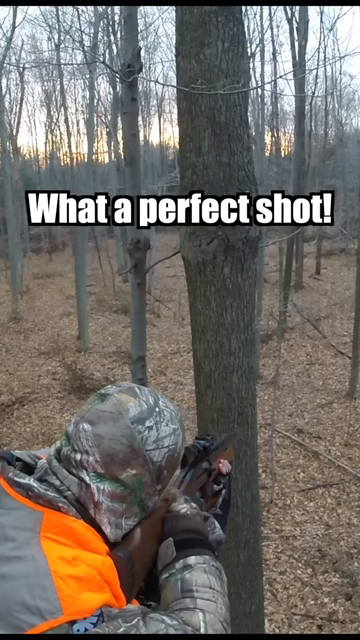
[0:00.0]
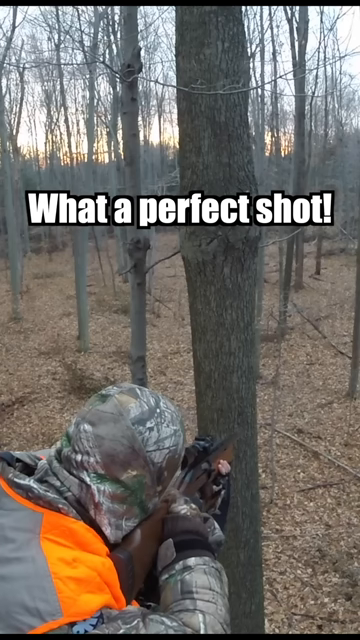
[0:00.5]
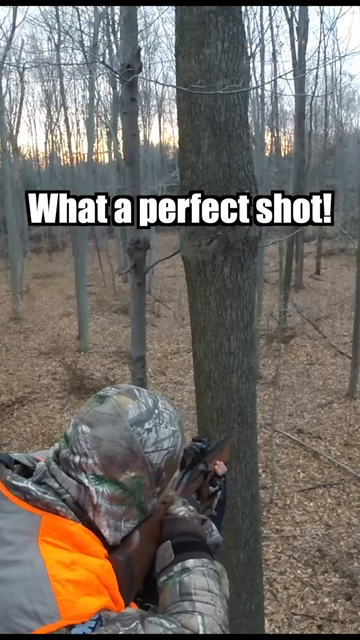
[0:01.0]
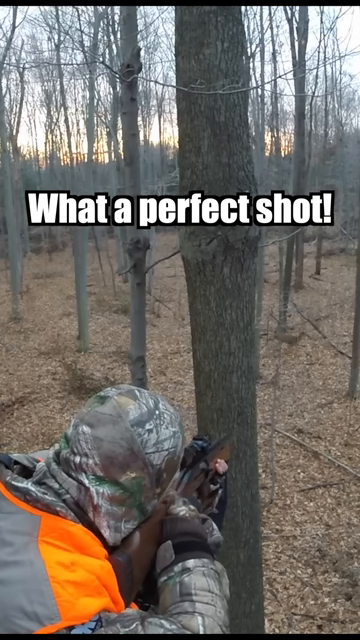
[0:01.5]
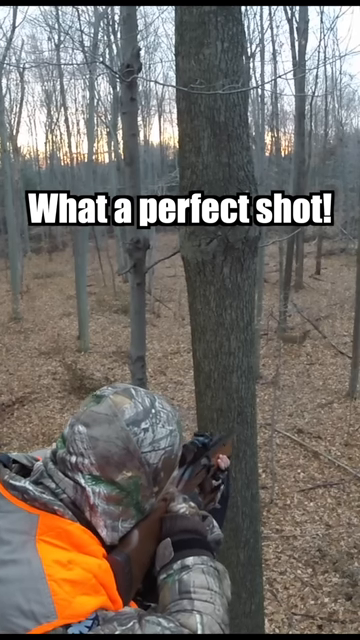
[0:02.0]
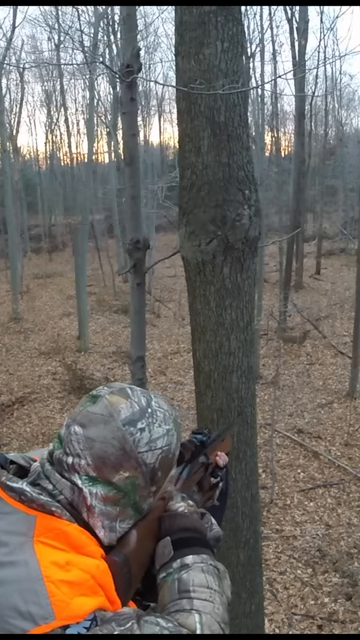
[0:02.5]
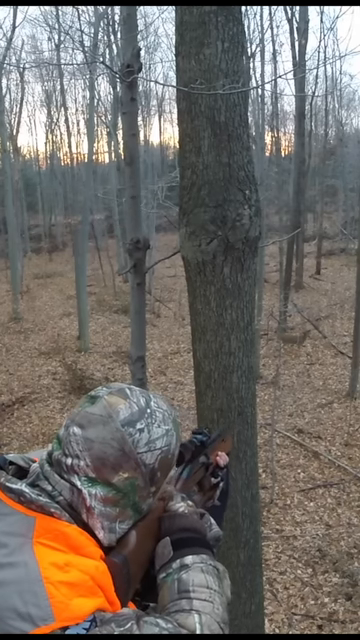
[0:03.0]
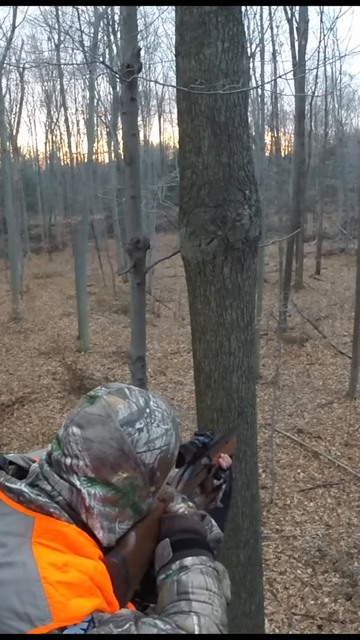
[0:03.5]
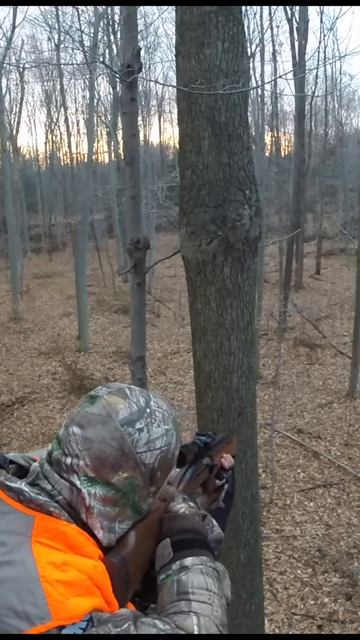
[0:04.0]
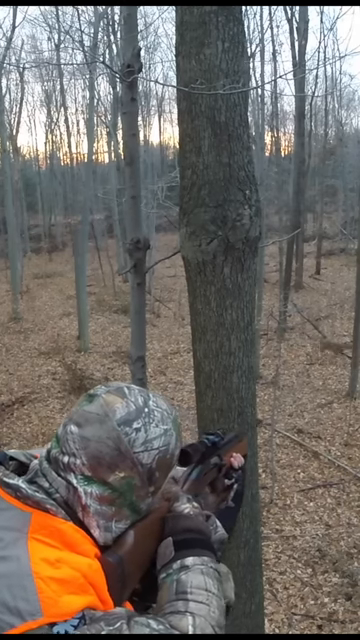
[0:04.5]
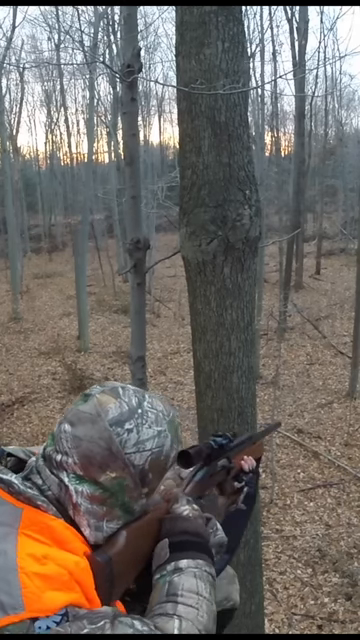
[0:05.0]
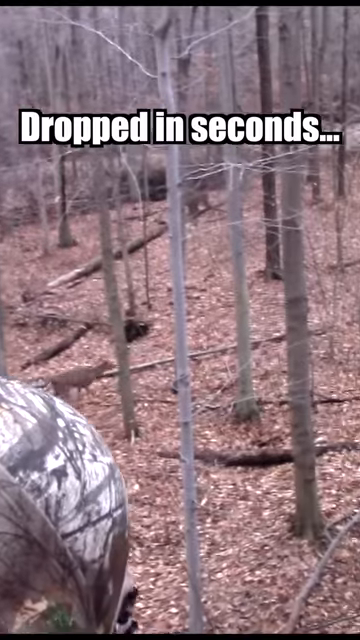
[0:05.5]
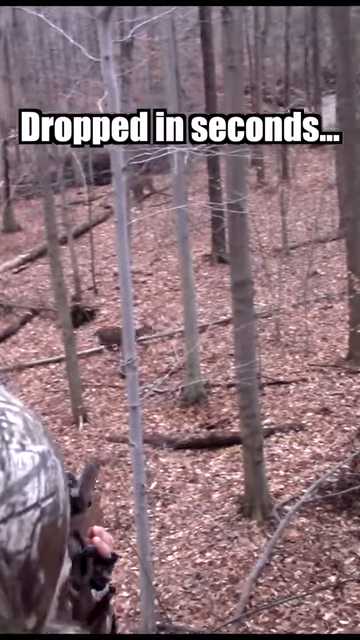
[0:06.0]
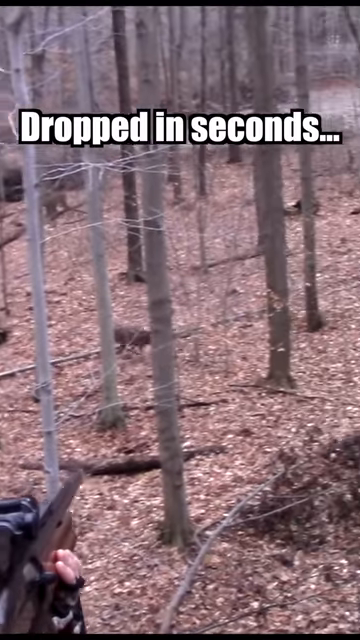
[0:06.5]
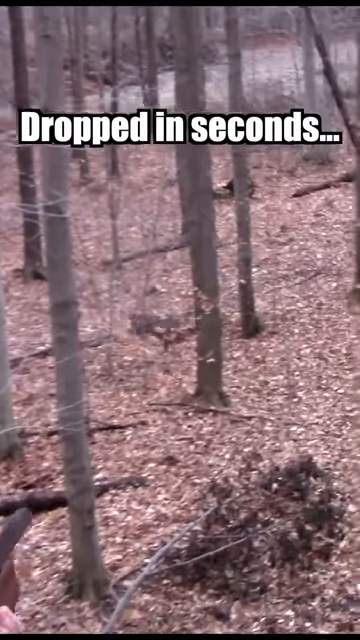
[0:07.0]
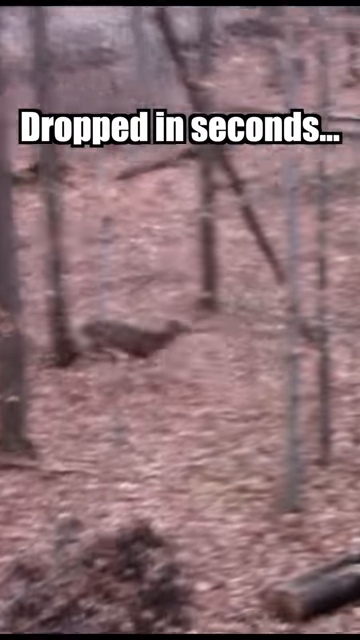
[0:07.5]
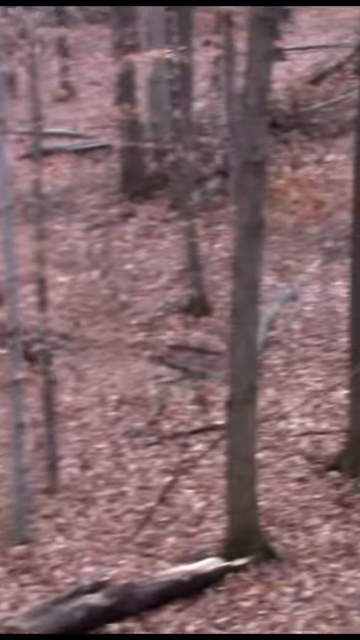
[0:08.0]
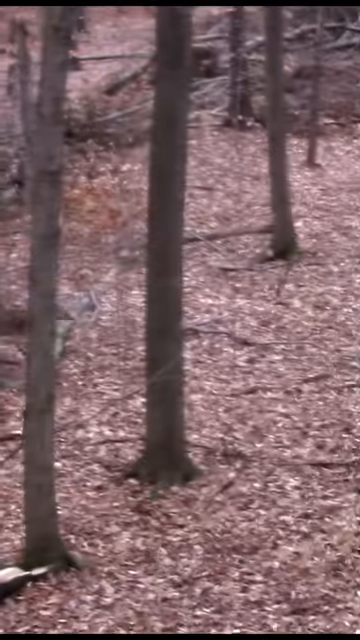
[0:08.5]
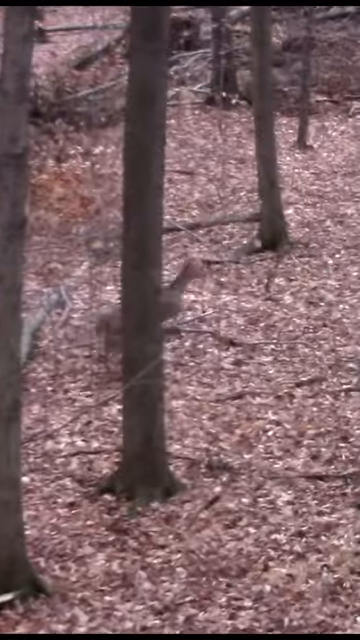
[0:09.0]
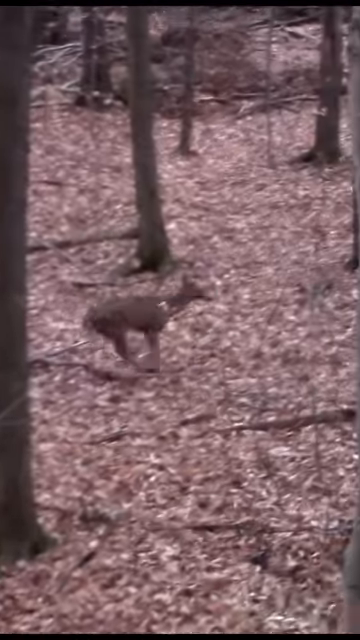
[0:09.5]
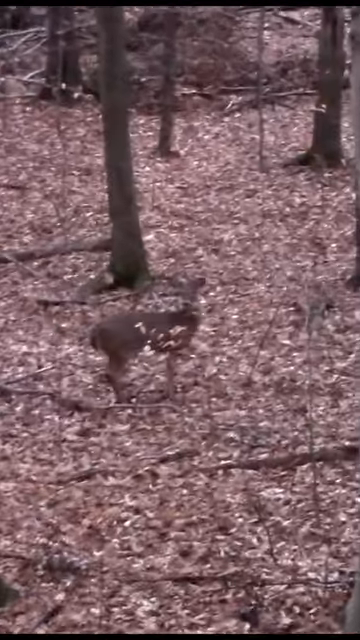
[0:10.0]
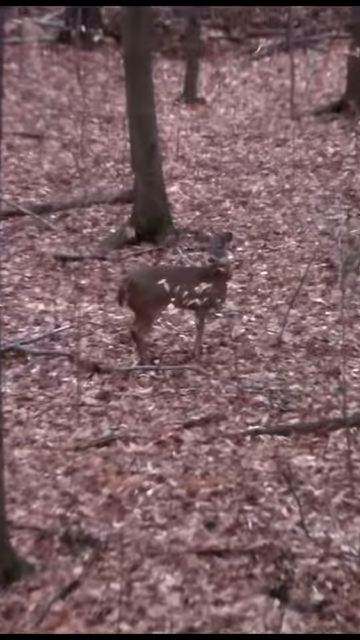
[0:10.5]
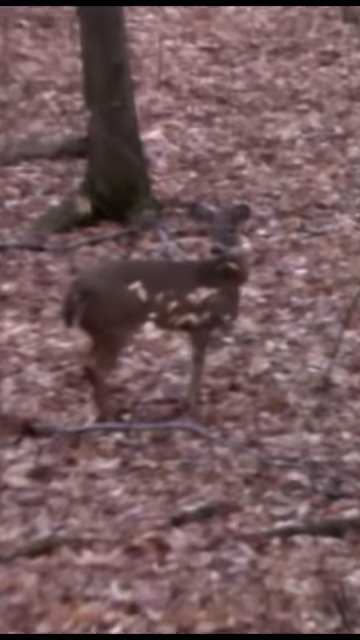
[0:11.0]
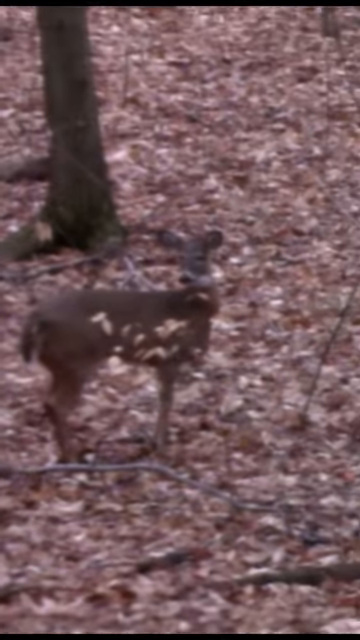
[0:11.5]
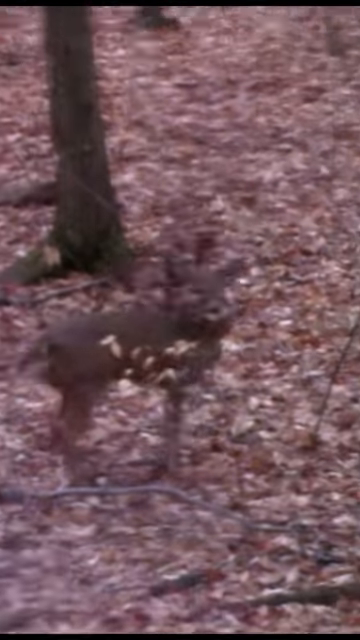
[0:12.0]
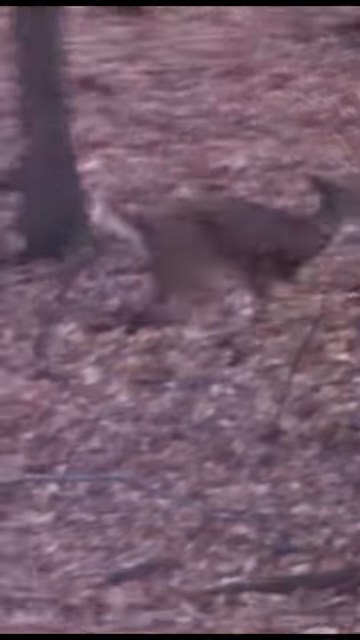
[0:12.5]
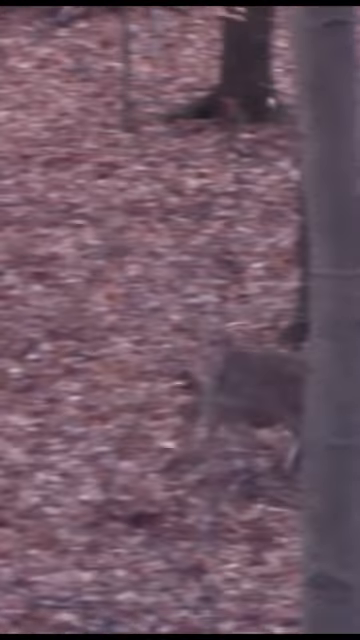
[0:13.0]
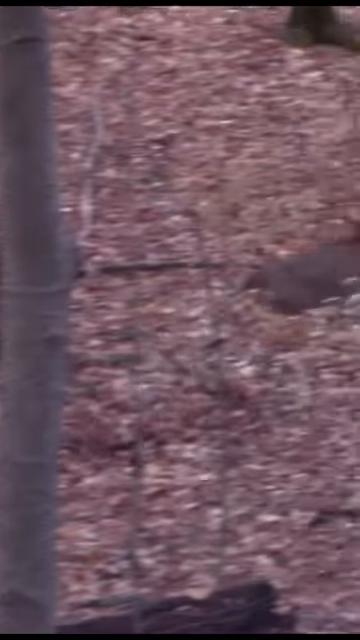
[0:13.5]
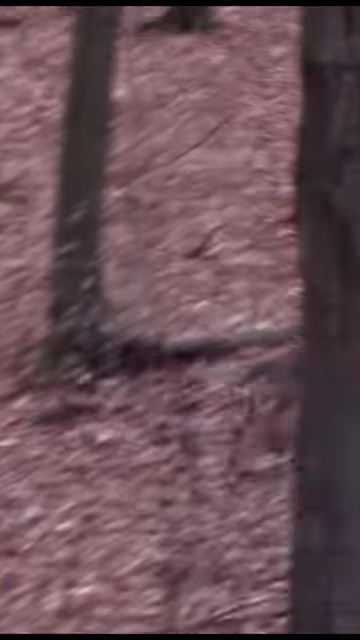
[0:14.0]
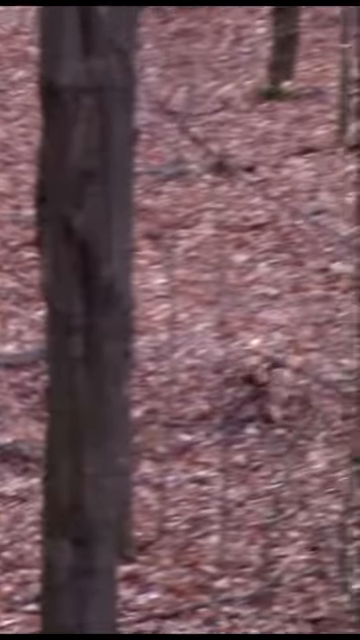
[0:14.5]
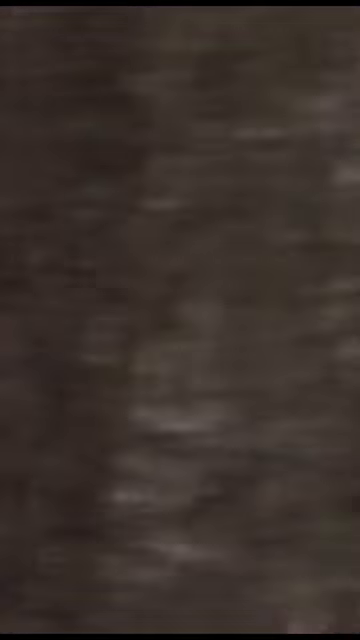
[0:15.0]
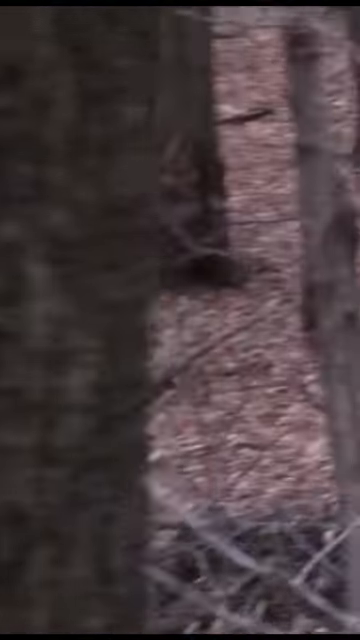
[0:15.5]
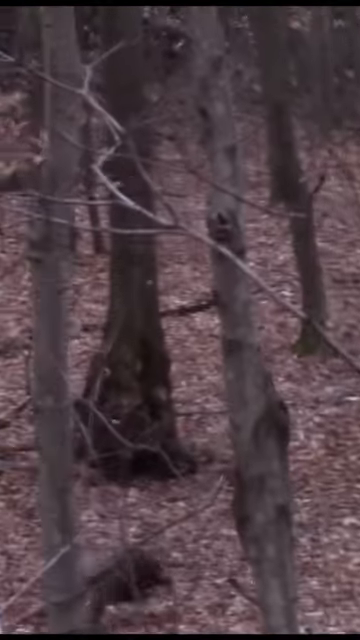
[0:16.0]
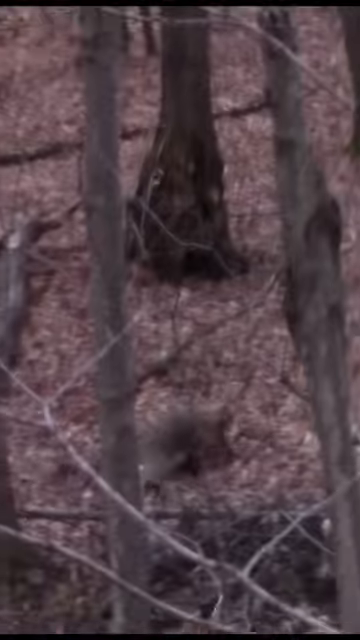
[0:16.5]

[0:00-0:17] The video, titled "What a Perfect Shot," shows a hunter killing a deer and is quite violent. The hunter is behind a tree, dressed in camouflaged clothing with a hood on. He has a rifle and follows the deer with it. The deer turns, apparently hearing something, and looks at the hunter. The hunter takes his shot and hits the deer. The deer flounders and stumbles in the woods after being shot, and it looks like it hits the ground as the video cuts off.